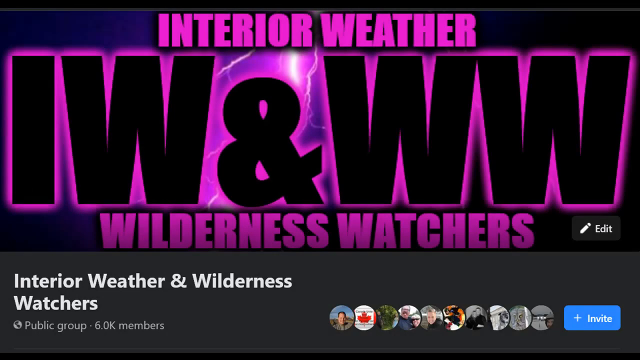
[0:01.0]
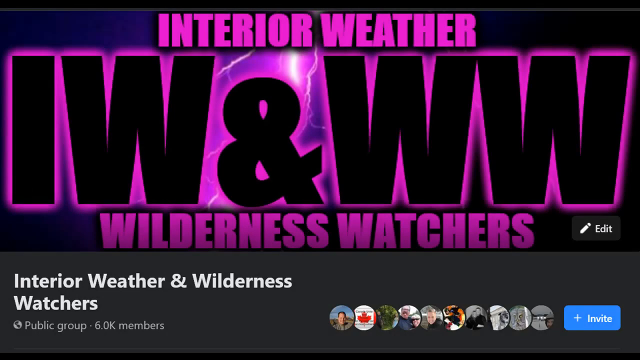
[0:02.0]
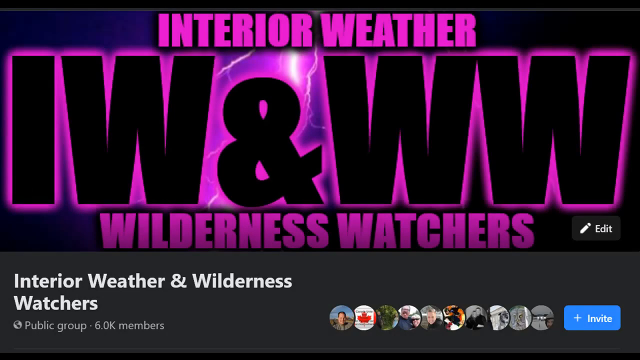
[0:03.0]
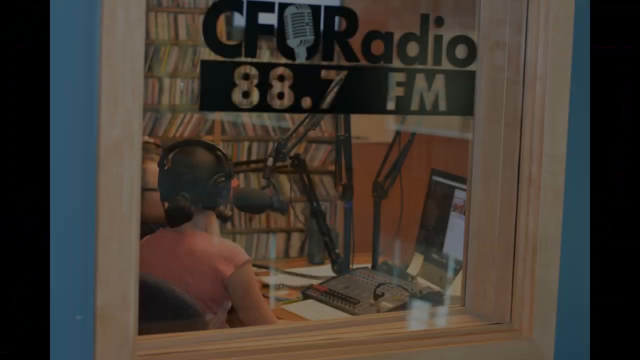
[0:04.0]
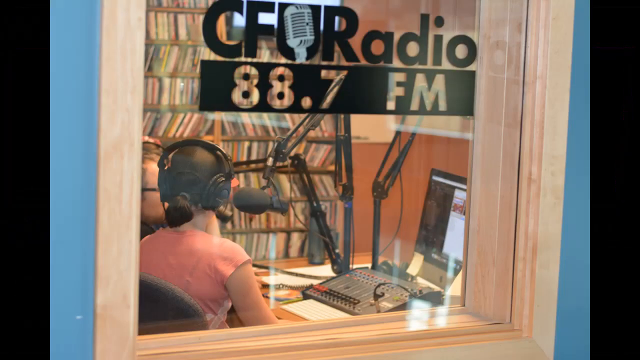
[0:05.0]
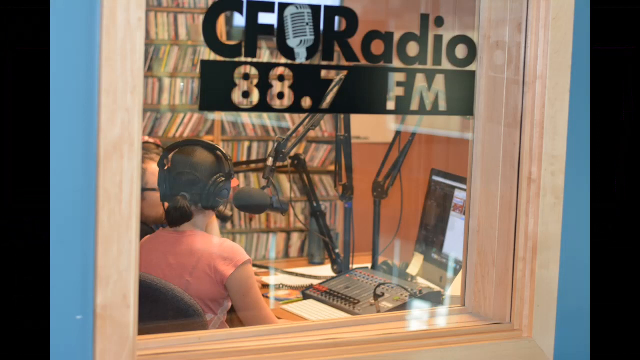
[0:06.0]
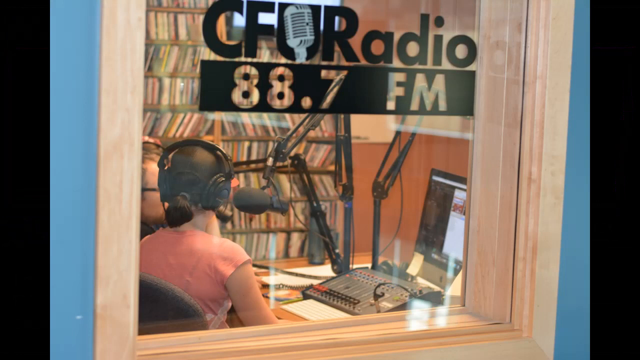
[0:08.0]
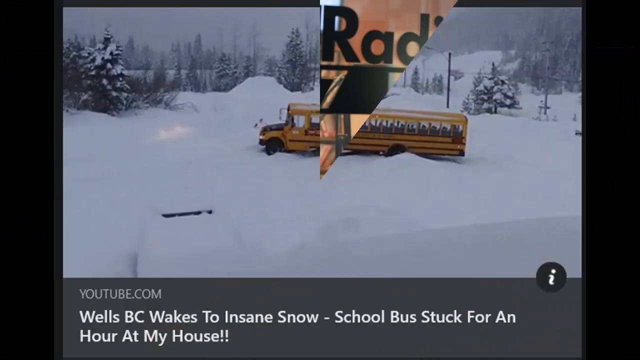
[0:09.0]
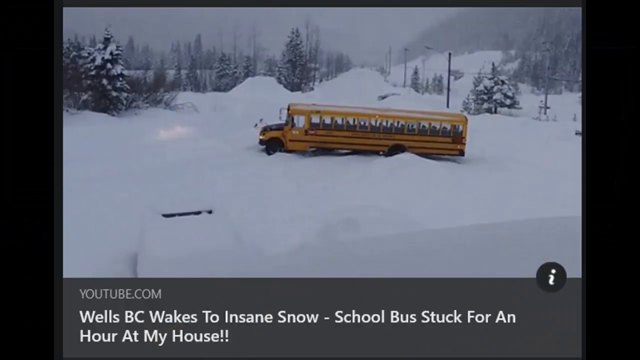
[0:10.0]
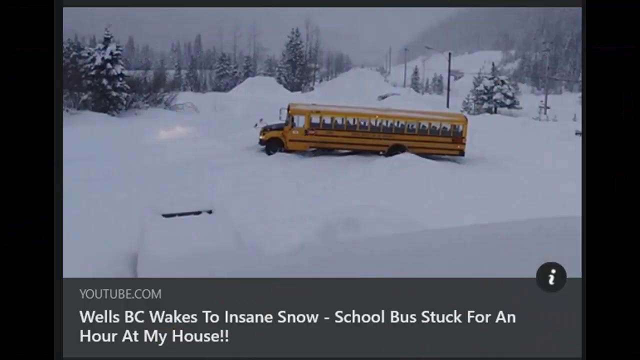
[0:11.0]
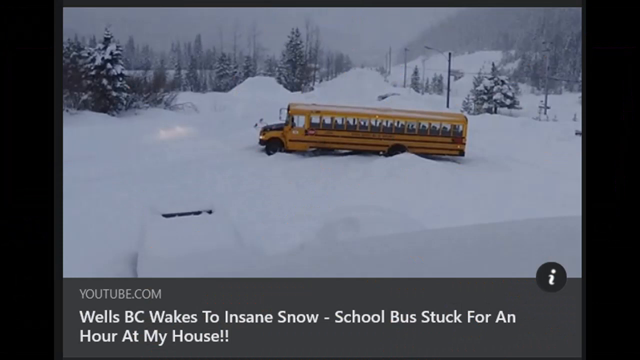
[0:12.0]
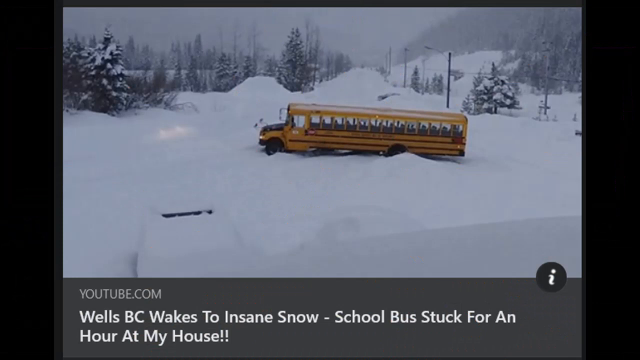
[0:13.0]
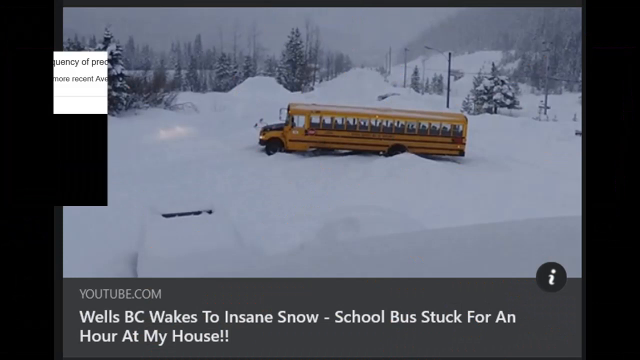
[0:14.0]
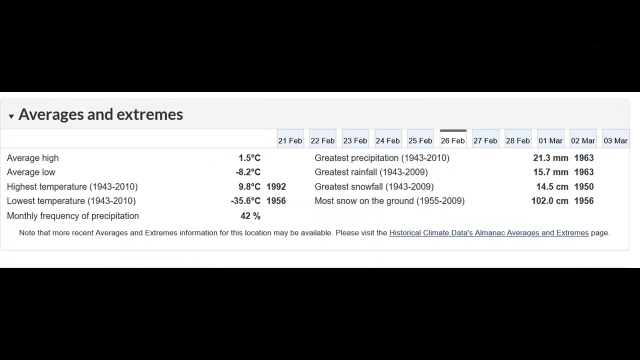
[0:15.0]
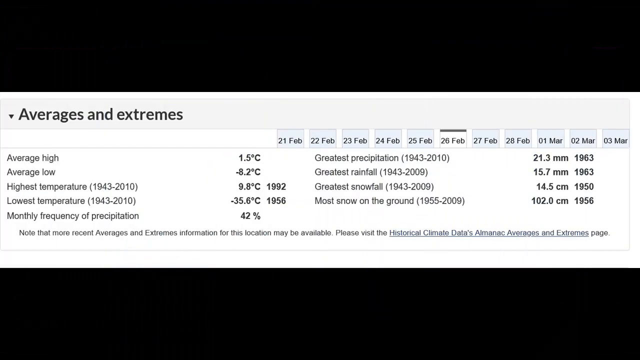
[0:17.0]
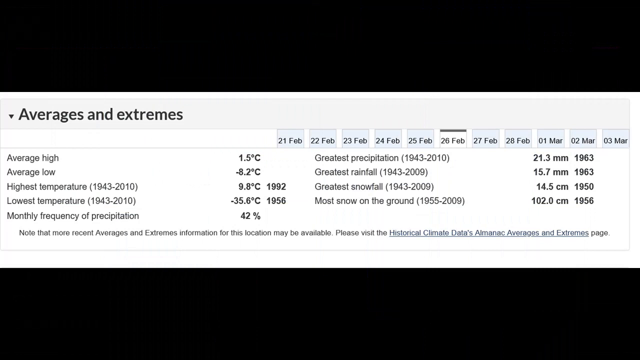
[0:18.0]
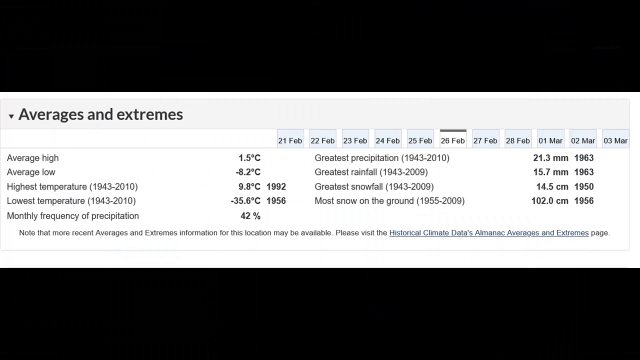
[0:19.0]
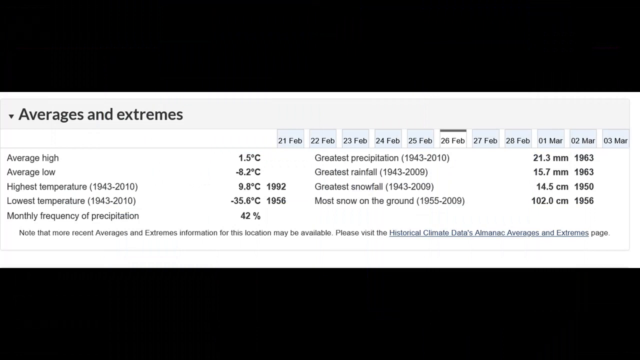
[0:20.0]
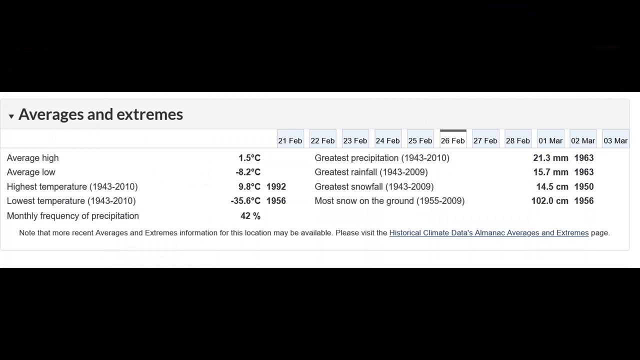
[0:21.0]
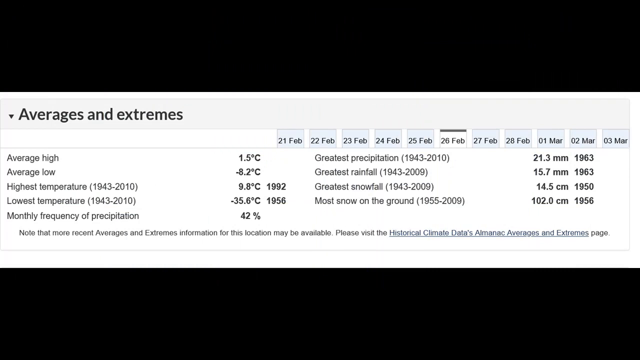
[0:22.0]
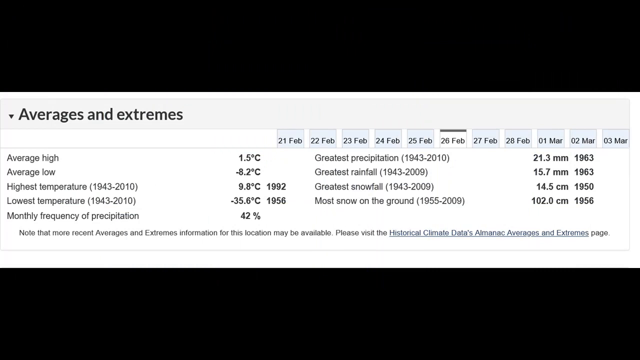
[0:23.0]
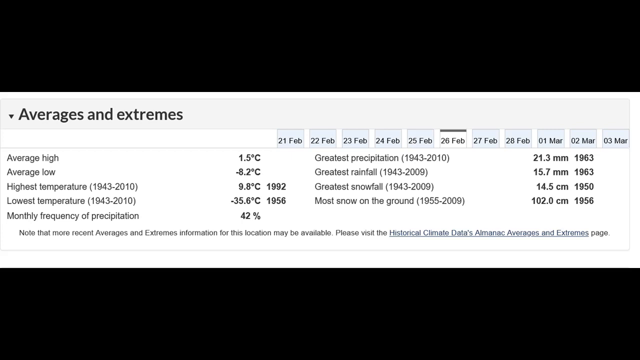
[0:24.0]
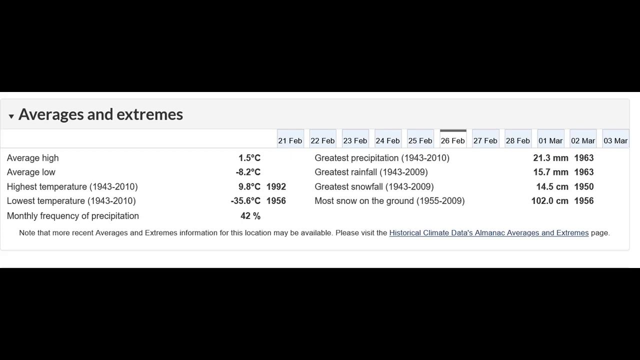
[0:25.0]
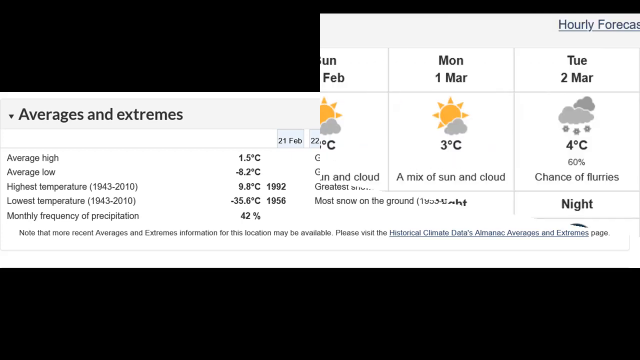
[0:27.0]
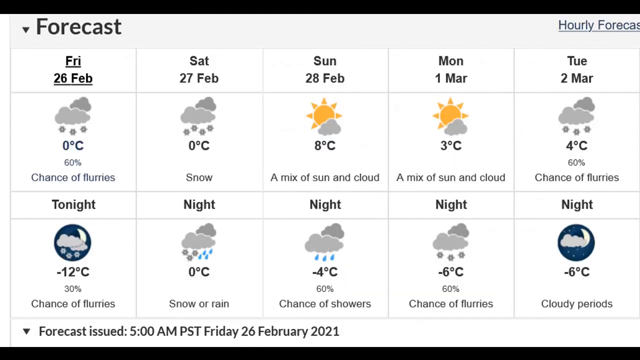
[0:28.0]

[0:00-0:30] The words "Interior Weather", "IW" and "WW" appear on screen, with WW standing for Weather Watch. A picture of a studio shows the text "XSFU Radio, 88.7 FM"; in the image, two people in the studio wear an earpiece and talk into a mic, with a screen in front. Something is trapped in snow with its headlights on, and there does not appear to be anybody inside. The video is from YouTube in China. A document headed "average extreme" lists an average high of 1.5 degrees, an average low of minus 8, a high temperature of 9.8, and a monthly frequency of precipitation of about 42 percent. It is a weather forecast chart.